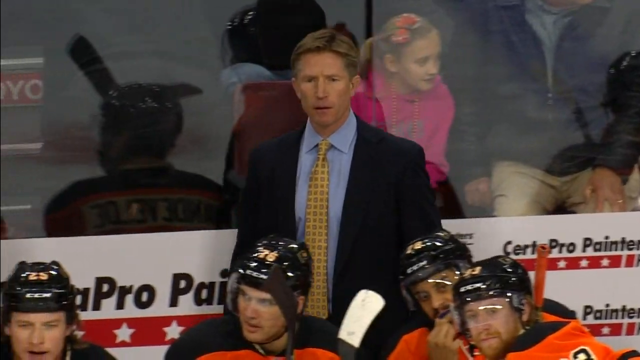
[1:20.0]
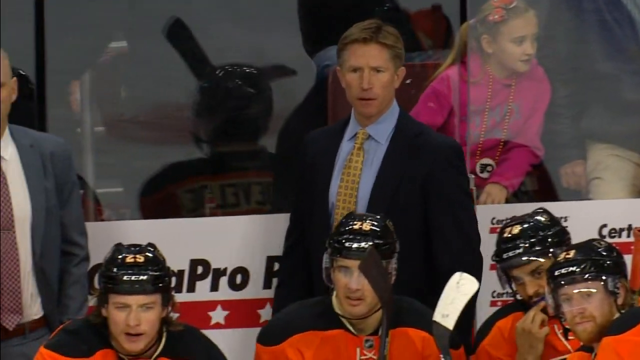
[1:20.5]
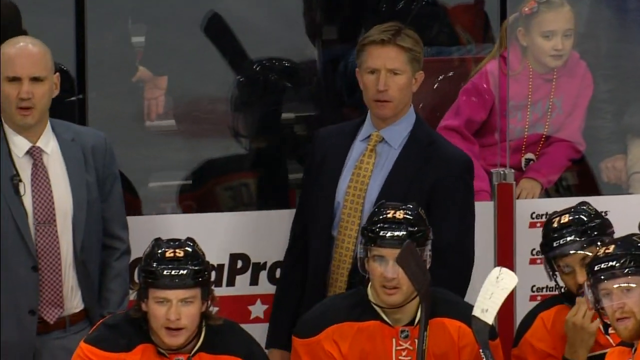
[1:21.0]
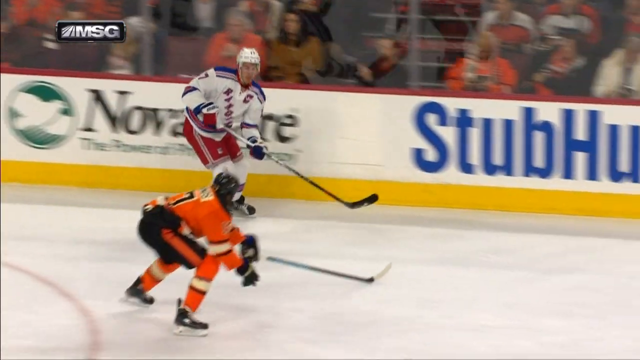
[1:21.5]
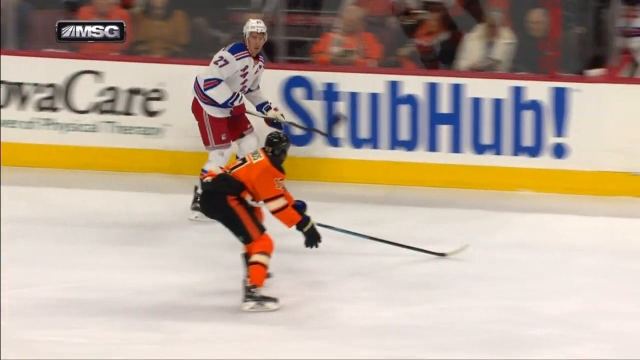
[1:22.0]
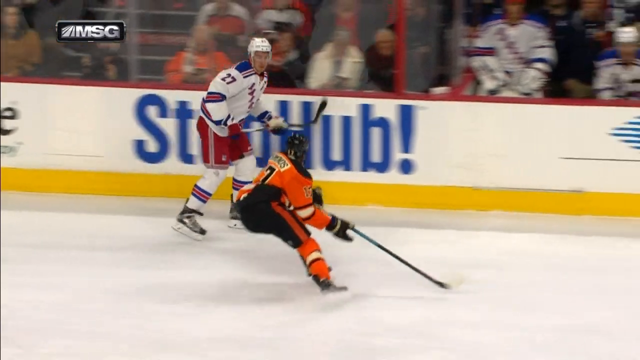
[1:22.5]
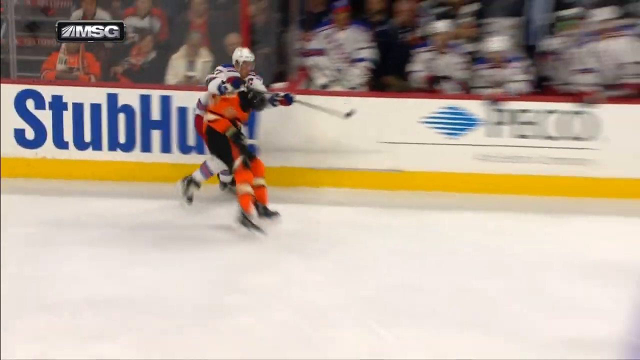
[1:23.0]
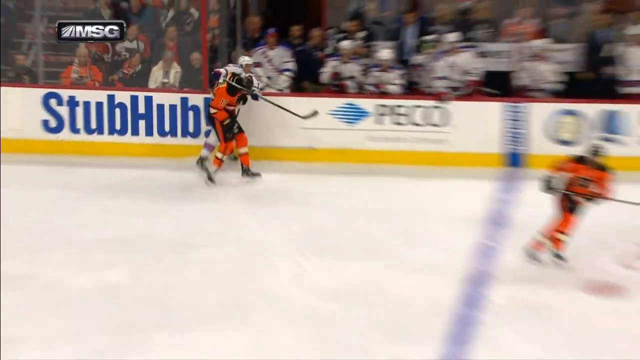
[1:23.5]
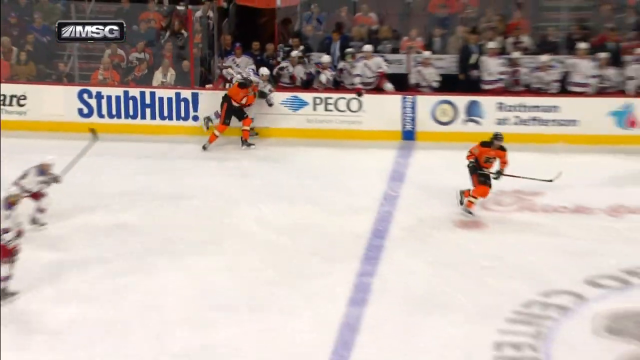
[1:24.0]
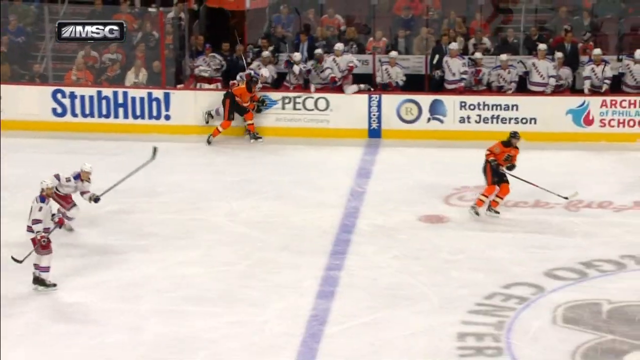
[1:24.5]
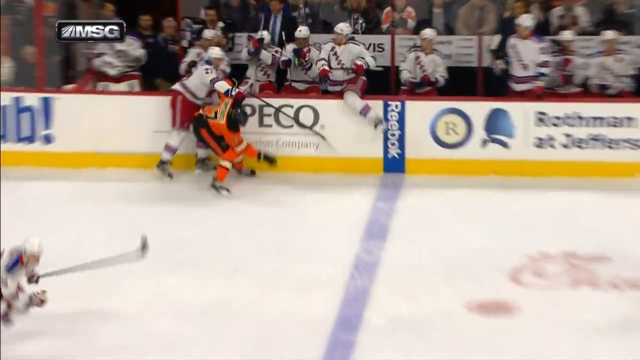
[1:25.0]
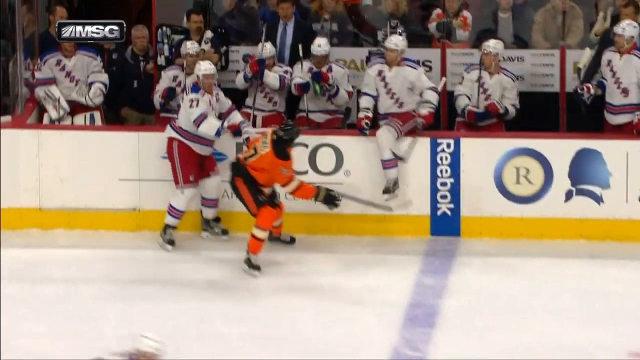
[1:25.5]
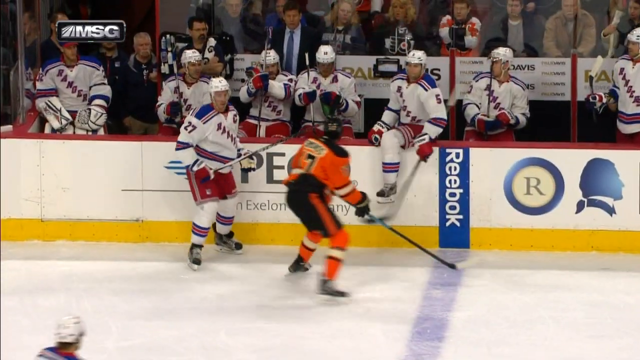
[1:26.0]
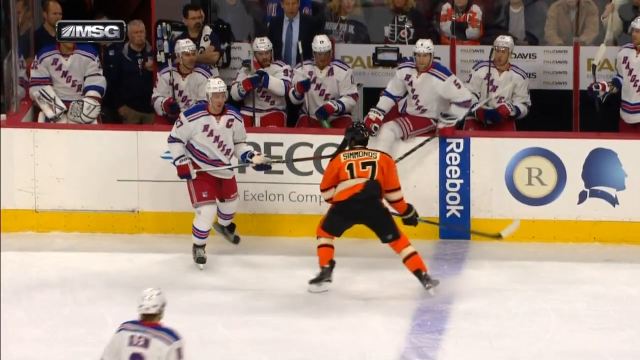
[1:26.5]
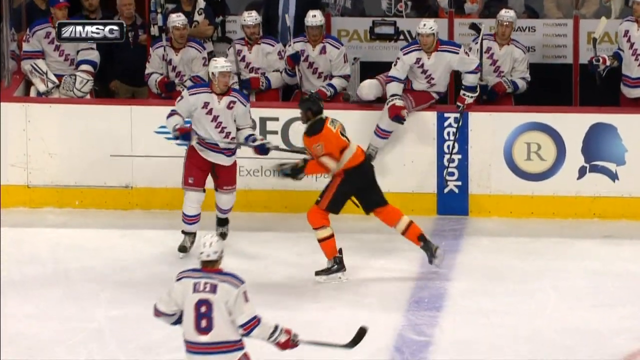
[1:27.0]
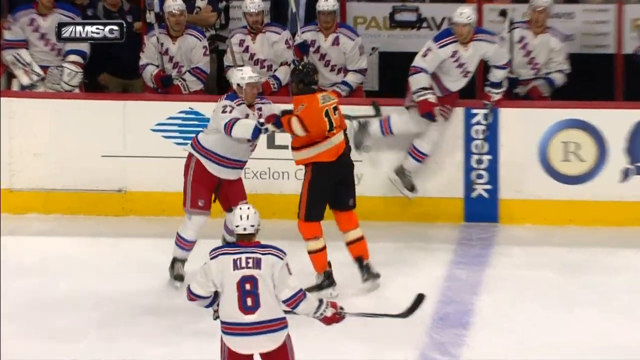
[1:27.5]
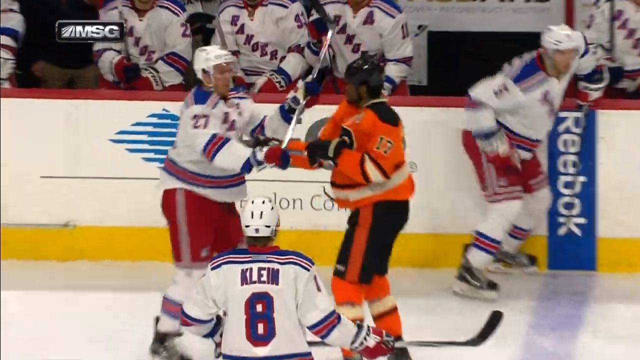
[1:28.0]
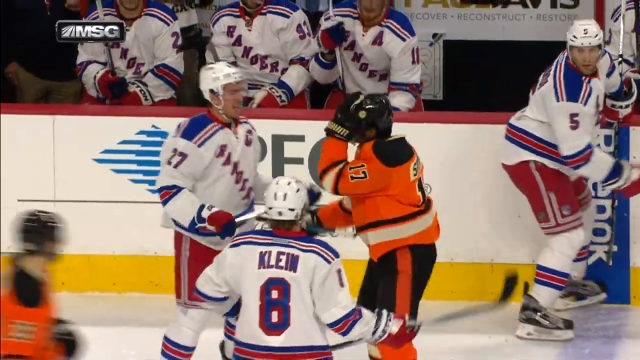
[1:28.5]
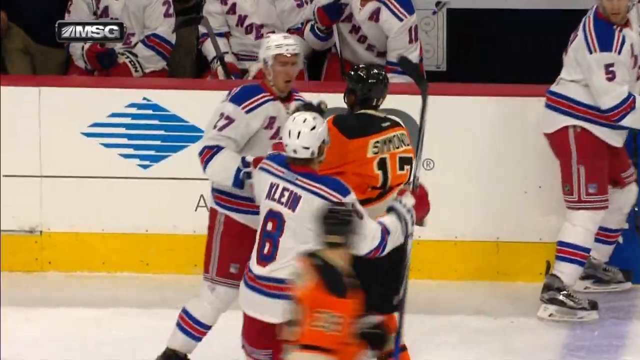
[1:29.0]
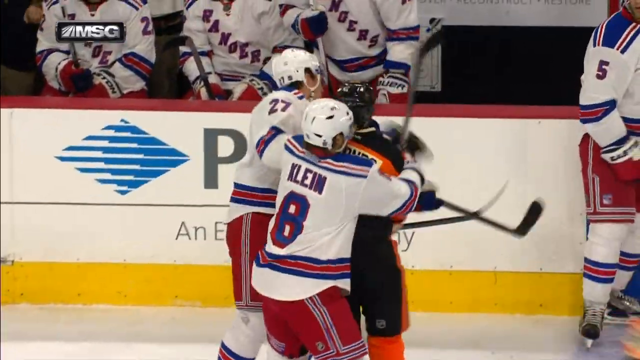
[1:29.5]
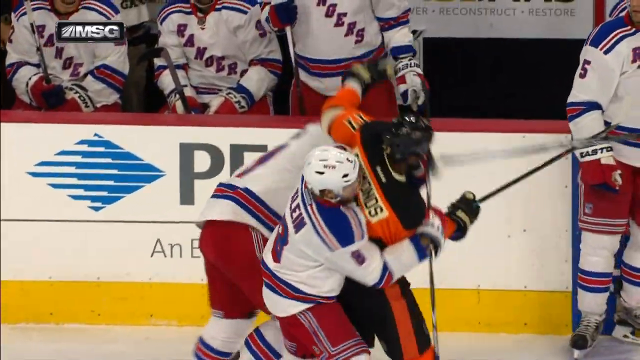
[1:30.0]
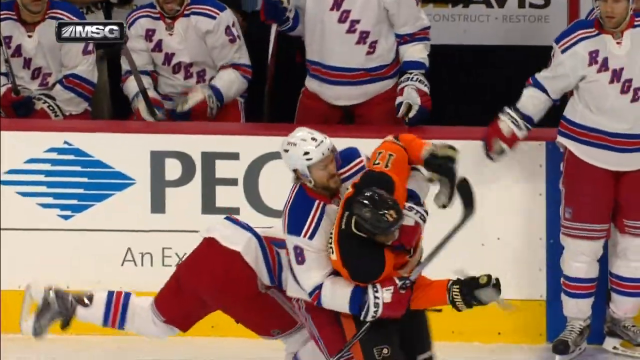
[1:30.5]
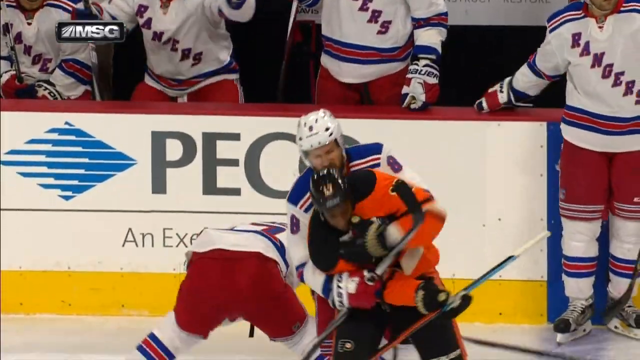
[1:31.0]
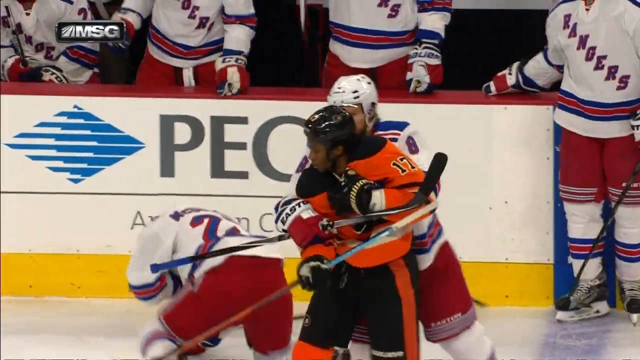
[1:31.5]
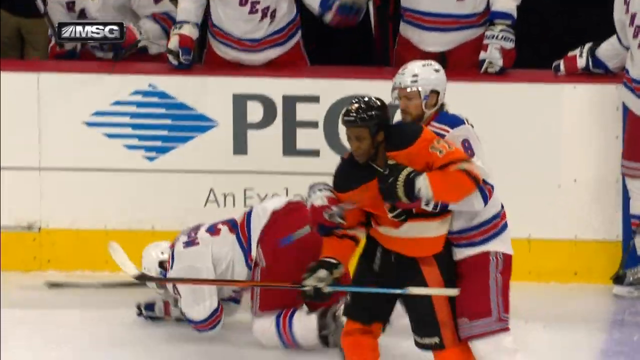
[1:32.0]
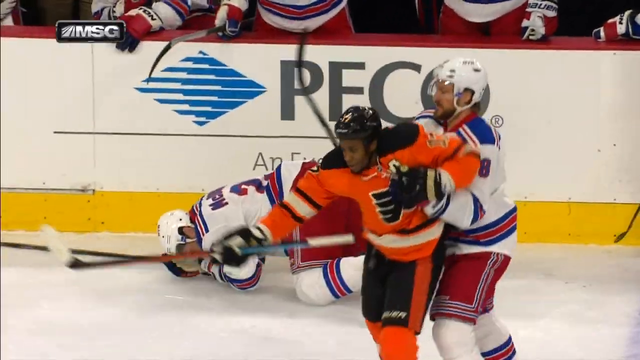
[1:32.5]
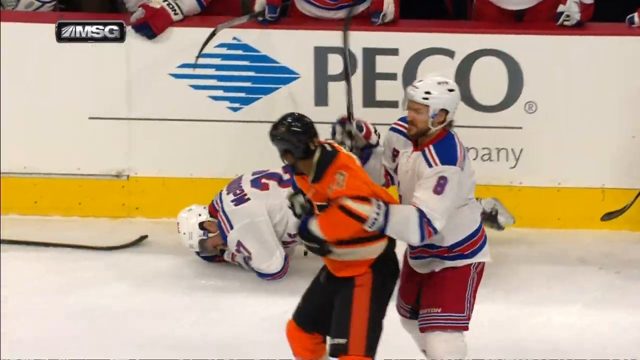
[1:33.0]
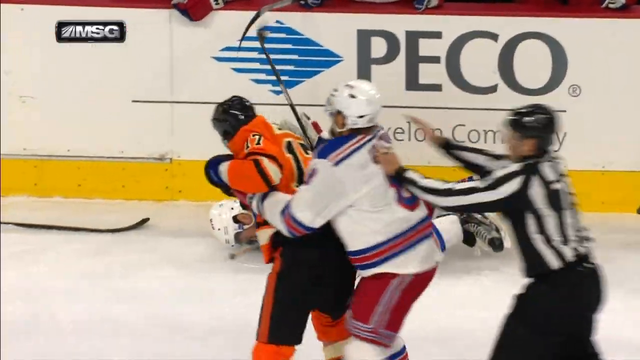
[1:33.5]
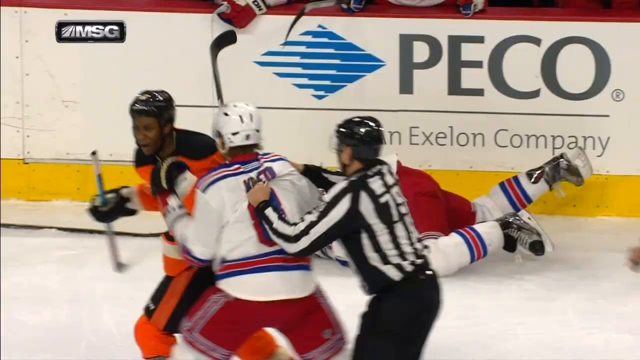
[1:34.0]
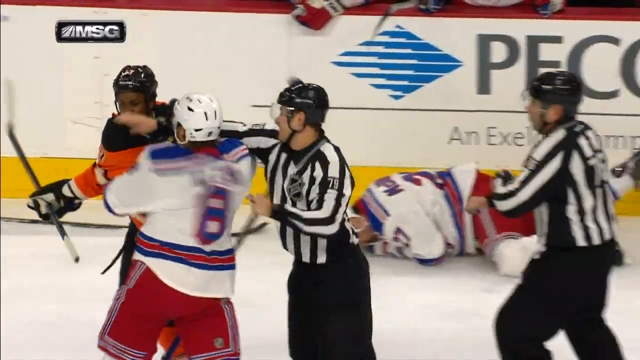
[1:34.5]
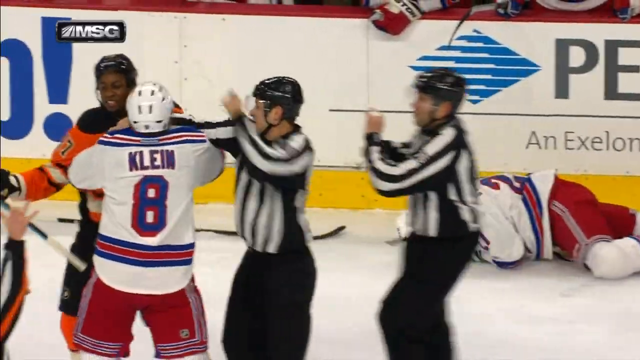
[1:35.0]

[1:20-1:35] Titled Gotta See It, Simmond Ejected for Interference, the video shows a Rangers player on the ground. Simmond, who plays for the Philadelphia Phillies, had slammed the Rangers player into the side wall; they were fighting, and Simmond elbowed him in the side of the head, which made him go down. His teammates check on him as he is on his hands and knees trying to get up, and they are all talking. The actual fight is then shown, with Simmond hitting him on the side with his elbow, and another Rangers player, named Klein, pulling Simmond off as the player goes down. The referee comes and ejects Simmond. A Rangers fan claps as he is ejected. This takes place right in front of where the Rangers' extra players are.